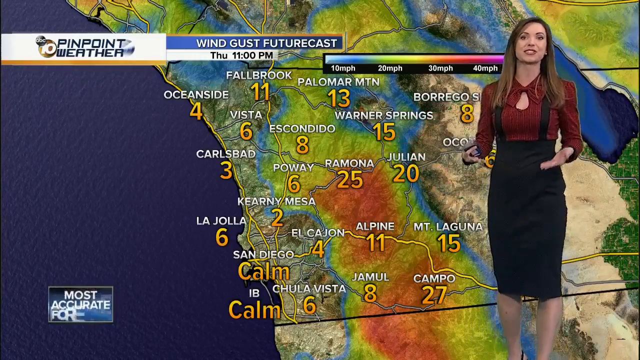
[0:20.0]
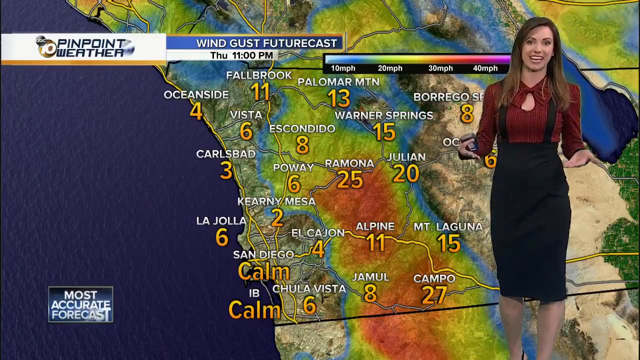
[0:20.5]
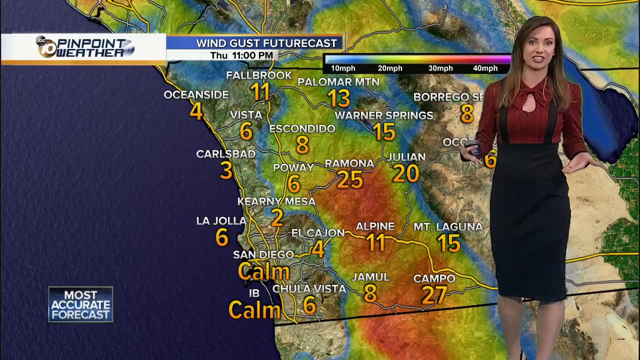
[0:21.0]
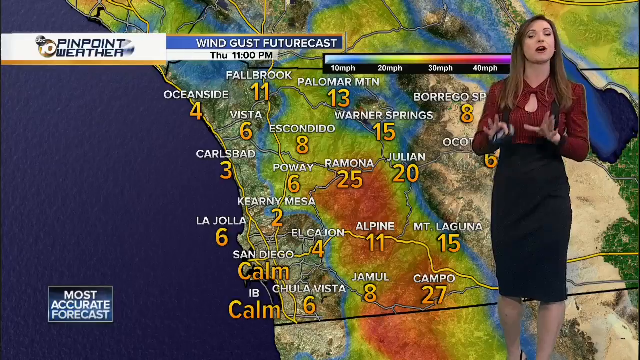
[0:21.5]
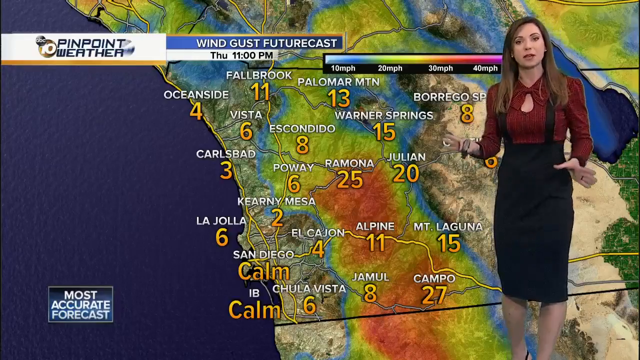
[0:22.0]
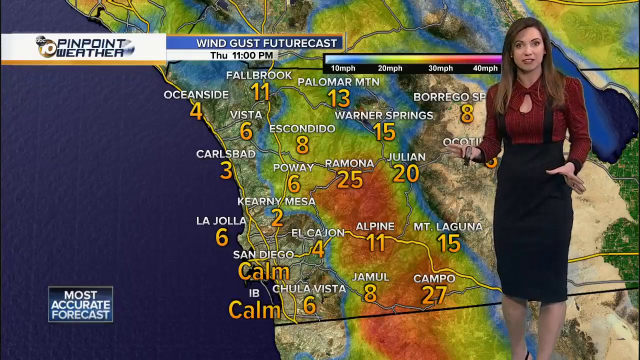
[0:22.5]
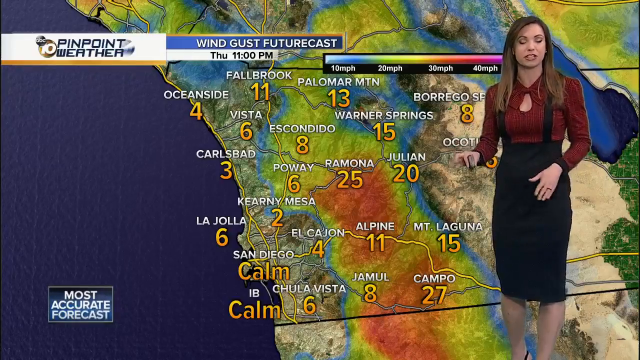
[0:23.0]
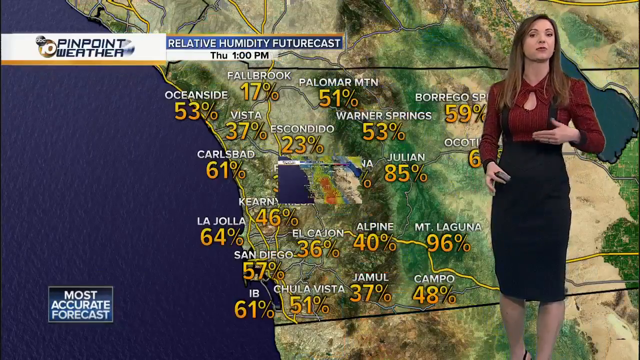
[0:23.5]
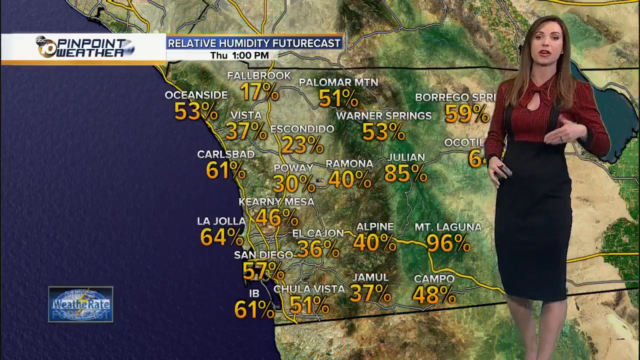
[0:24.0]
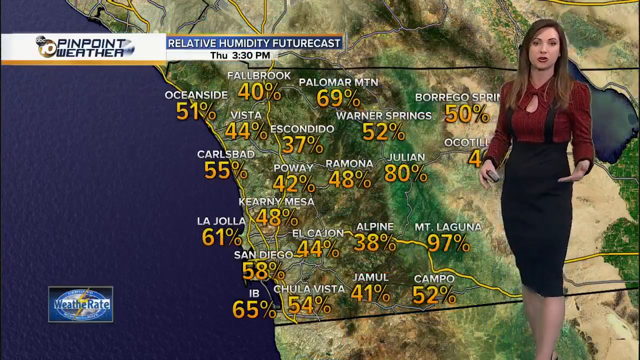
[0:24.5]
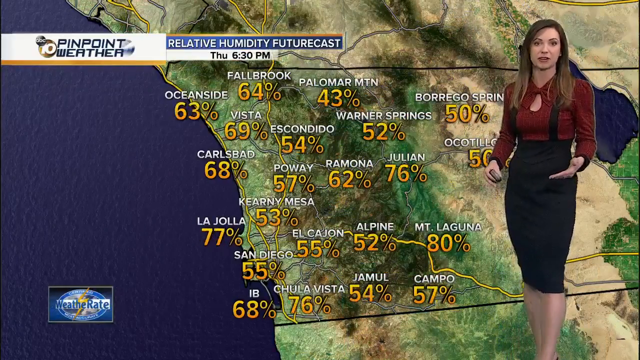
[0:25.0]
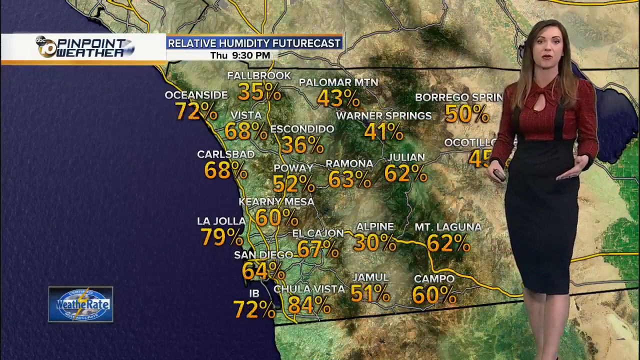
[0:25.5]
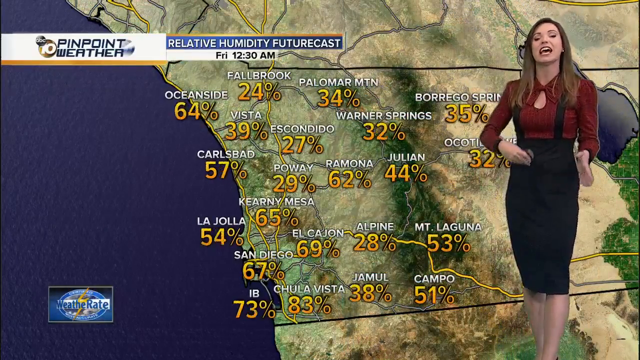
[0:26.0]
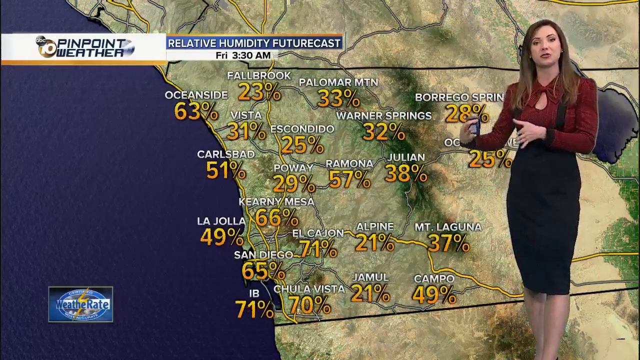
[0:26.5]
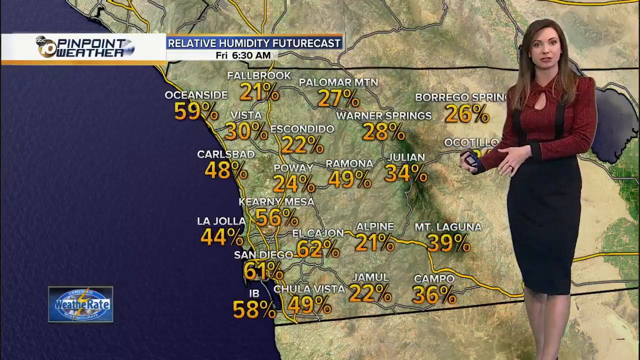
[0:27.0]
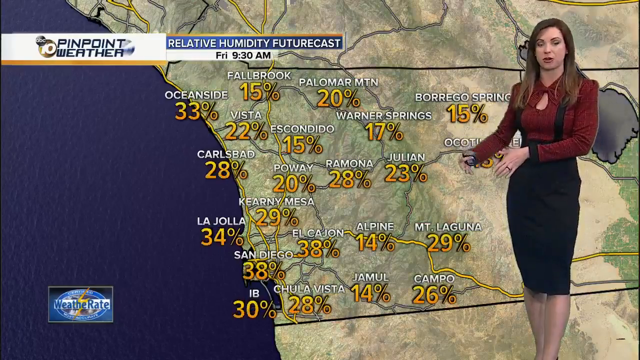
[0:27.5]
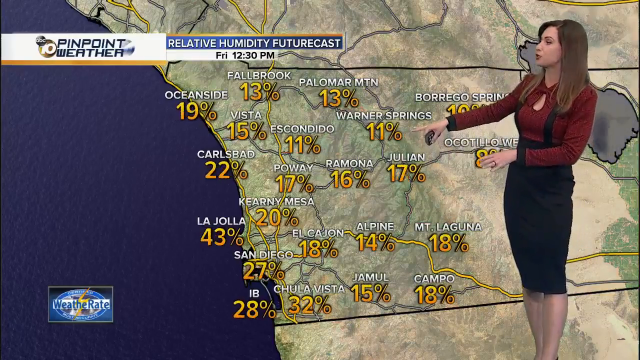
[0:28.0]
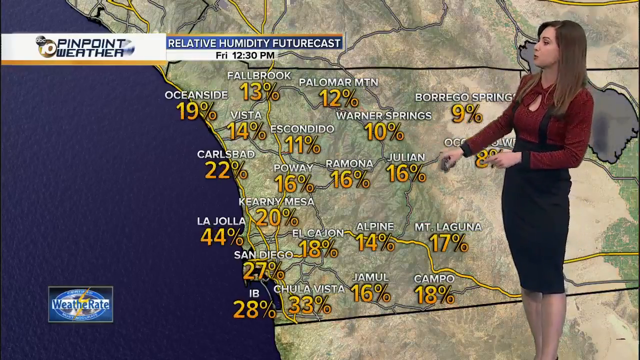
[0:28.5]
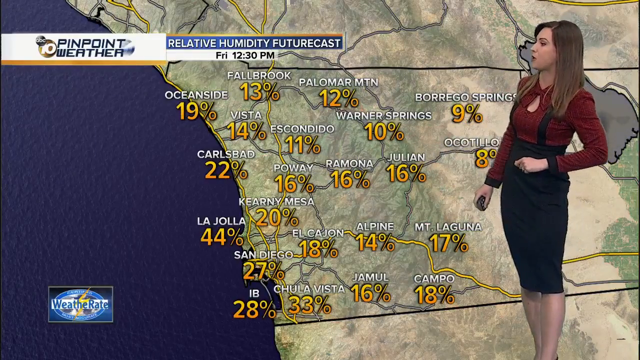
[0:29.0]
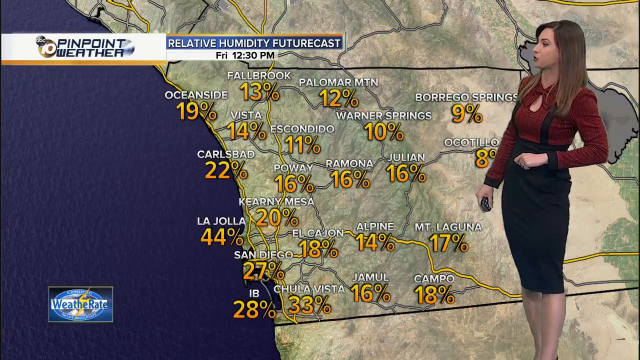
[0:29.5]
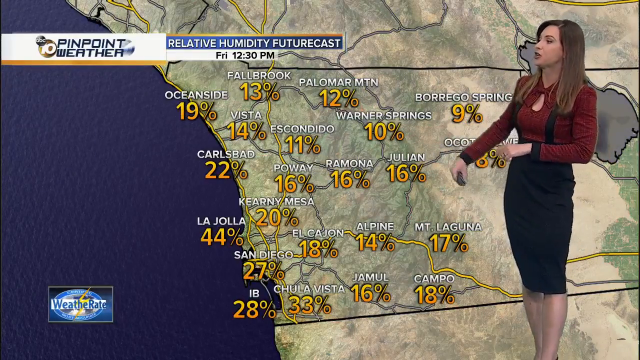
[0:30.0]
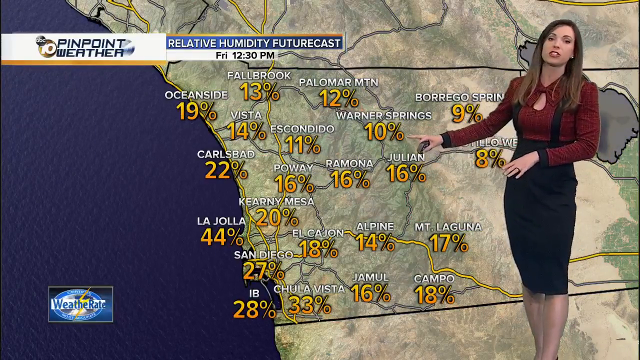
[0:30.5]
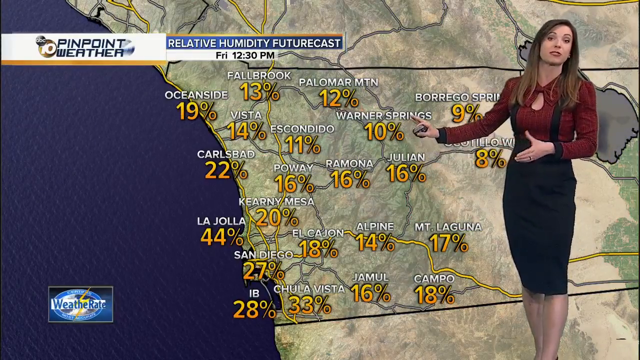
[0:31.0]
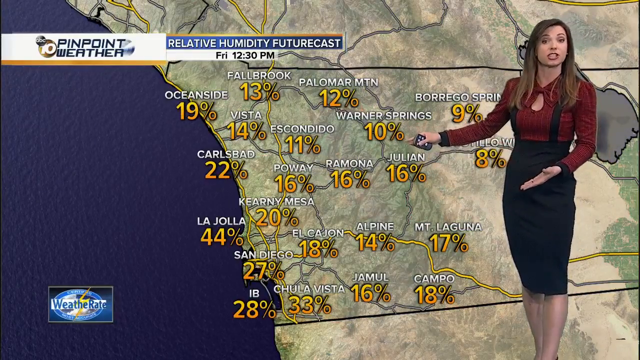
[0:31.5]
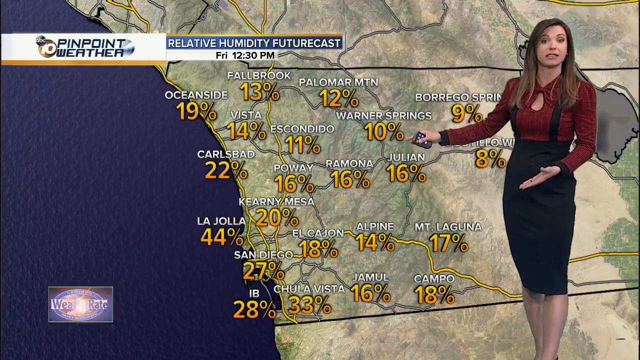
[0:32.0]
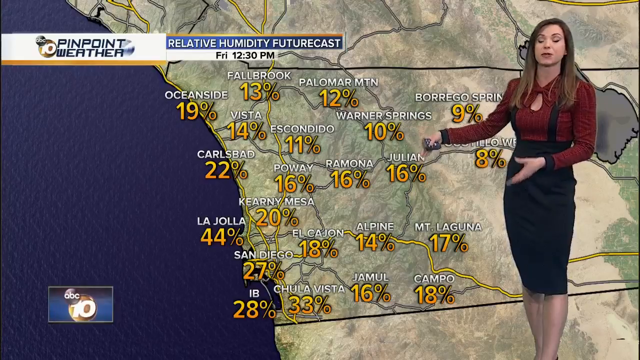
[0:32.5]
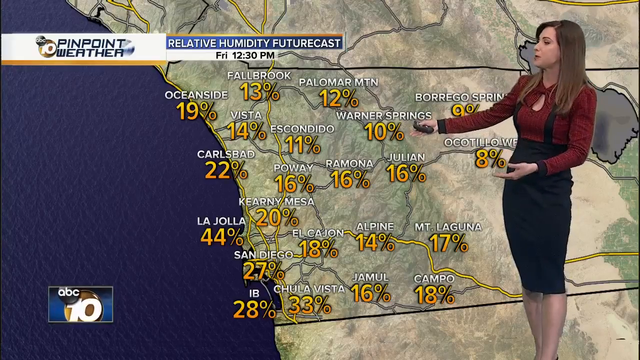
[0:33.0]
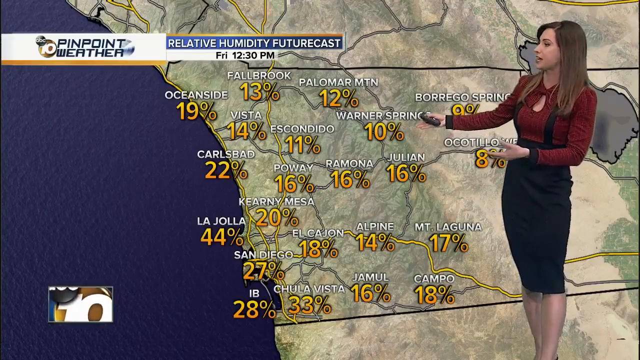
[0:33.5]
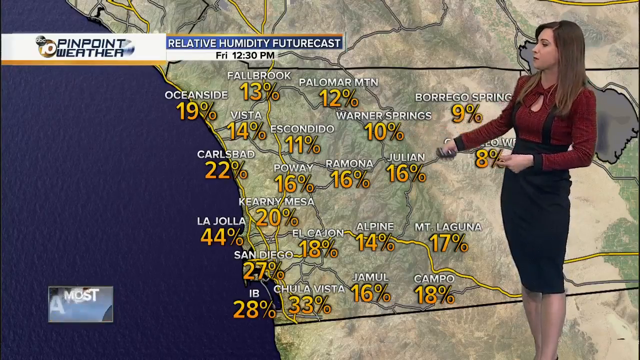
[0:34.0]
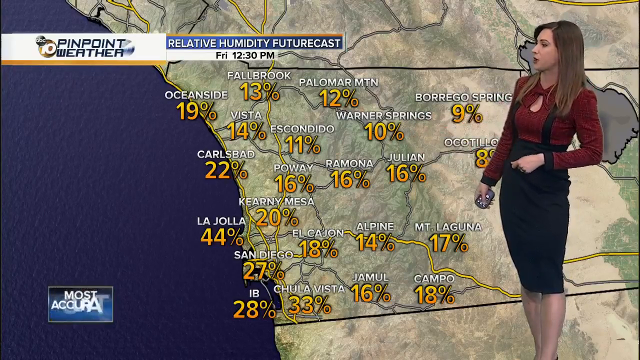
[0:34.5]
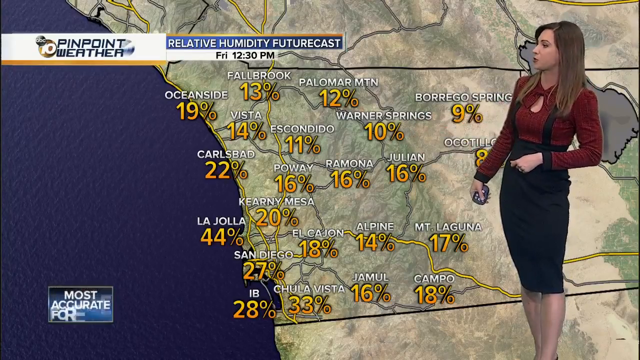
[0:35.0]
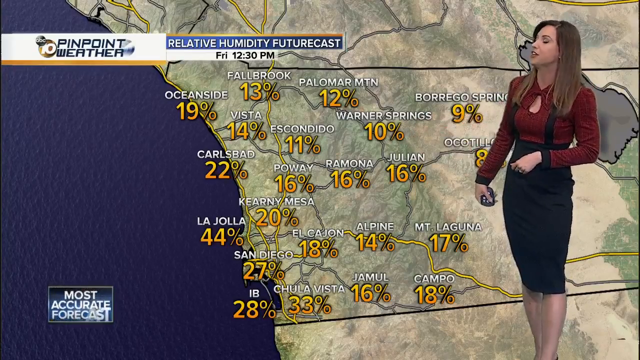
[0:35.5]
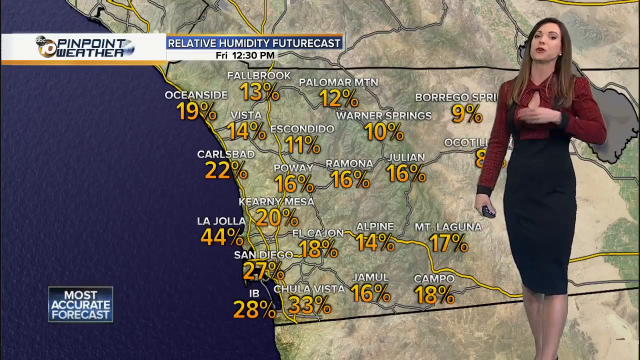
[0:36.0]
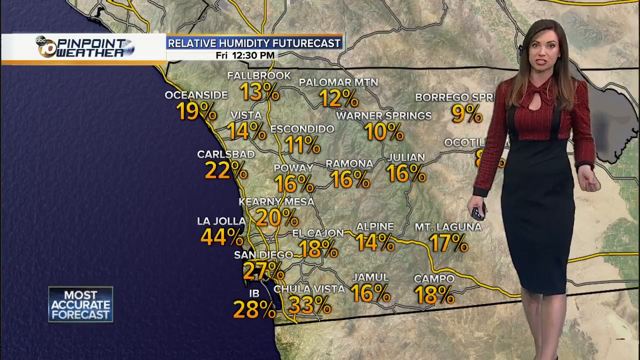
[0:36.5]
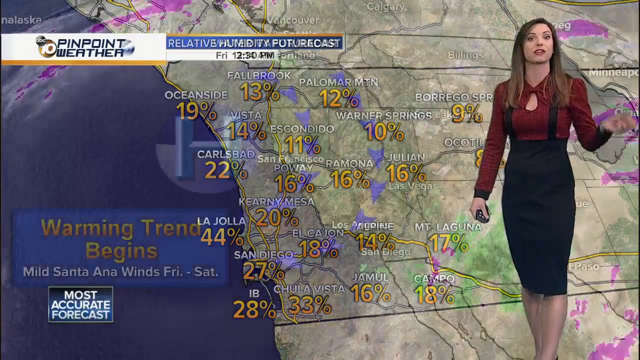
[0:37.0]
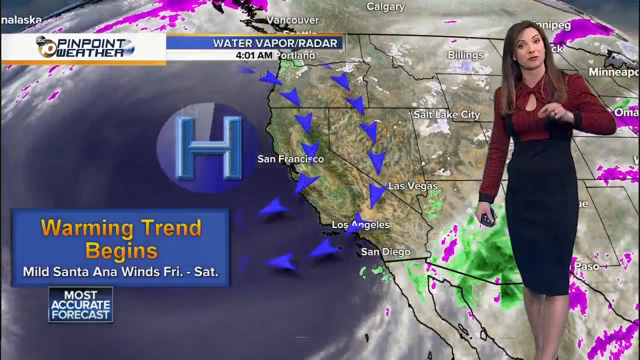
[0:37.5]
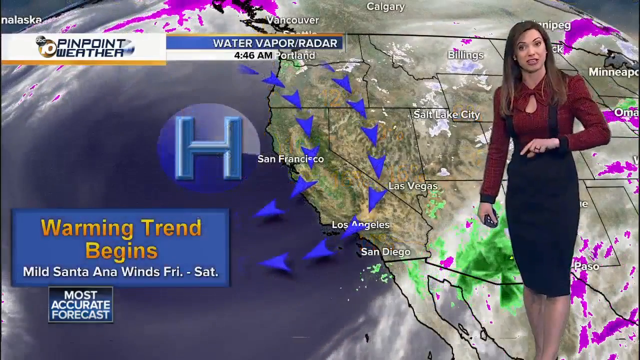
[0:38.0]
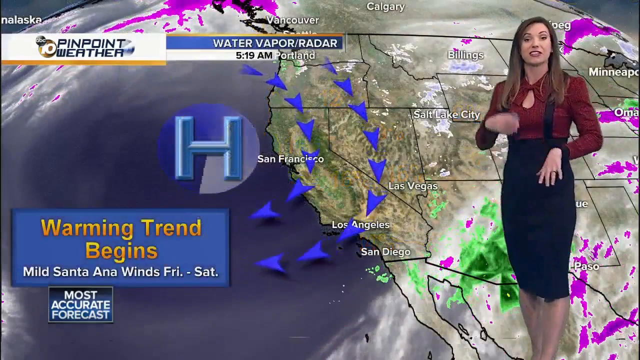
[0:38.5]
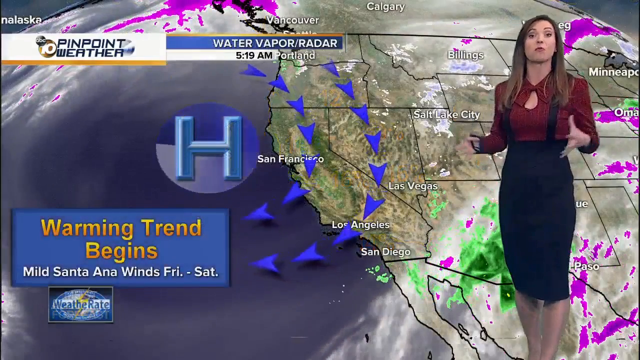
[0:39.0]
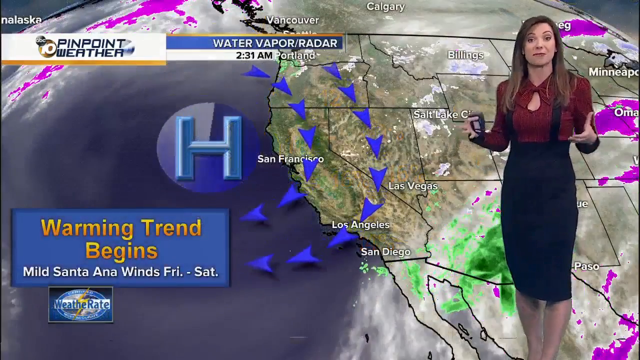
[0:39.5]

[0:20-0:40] The same presenter stands in front of a large map. The graphics change: two purple backgrounds appear on the left side, while on the other side numbers are scattered over the map on green, blue, orange and yellow backgrounds, the colors representing the weather. City names are written on the map, and "Pacific Ocean" and streams are visible. The weather numbers are written in gold and yellow. The display then changes again, with each city labeled in clearly visible text. The woman keeps gesturing and pointing, talking directly to the camera and then looking back at the map.